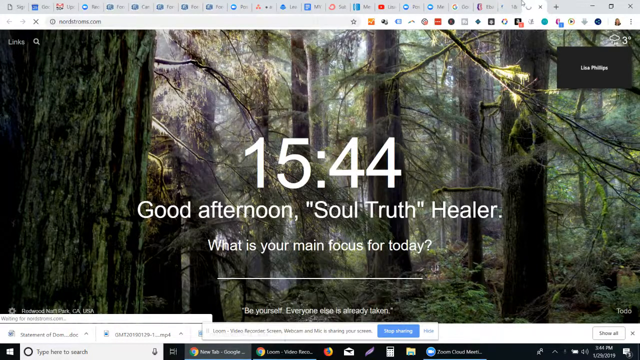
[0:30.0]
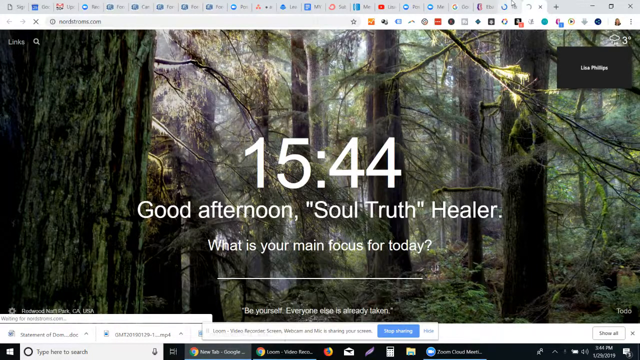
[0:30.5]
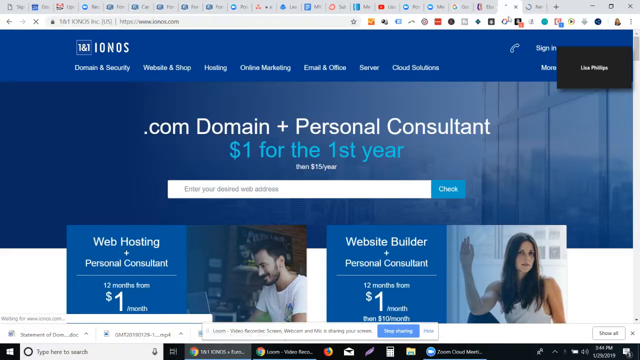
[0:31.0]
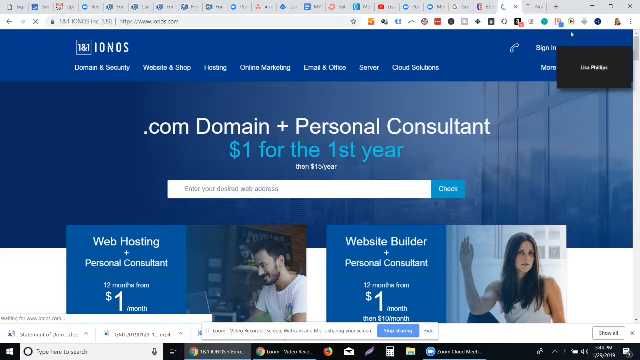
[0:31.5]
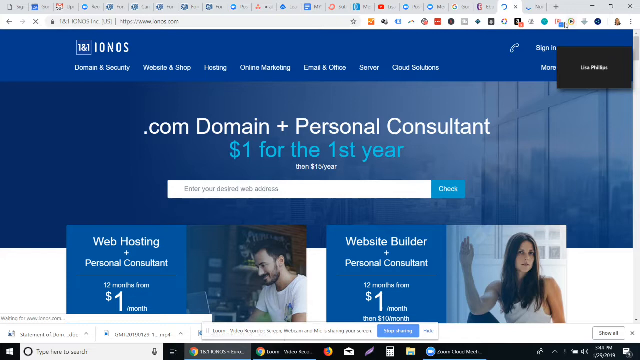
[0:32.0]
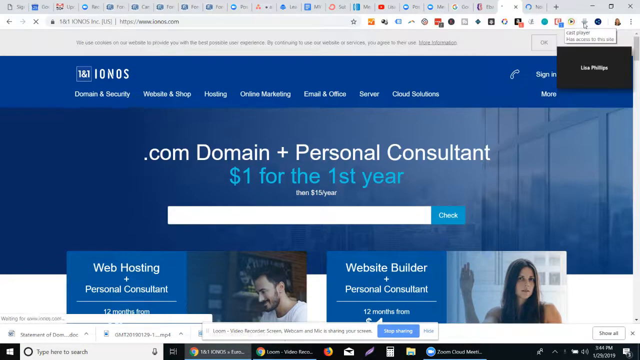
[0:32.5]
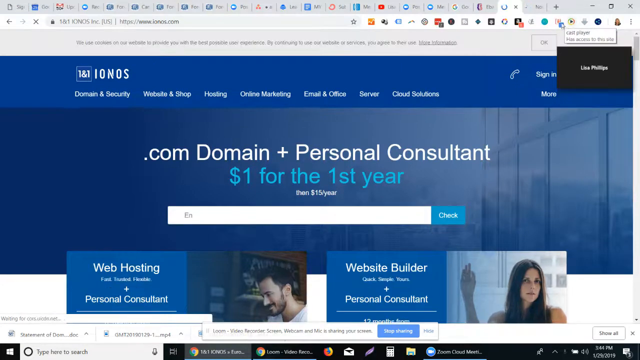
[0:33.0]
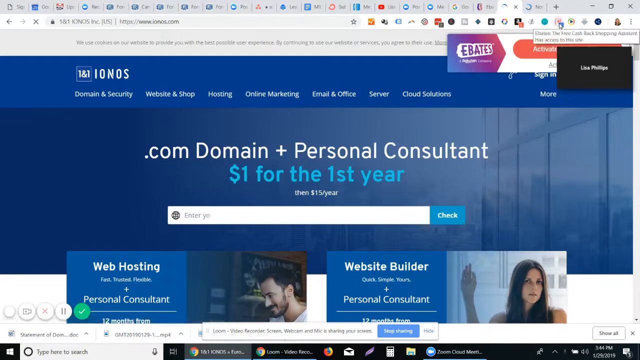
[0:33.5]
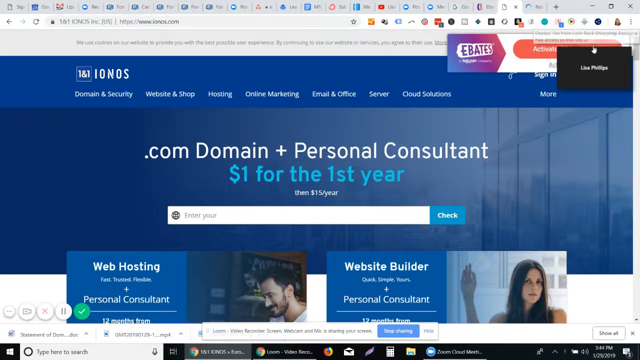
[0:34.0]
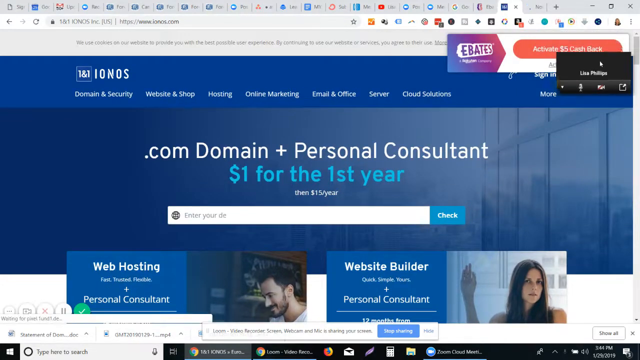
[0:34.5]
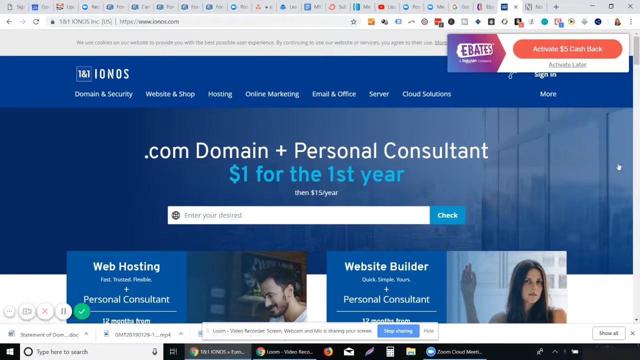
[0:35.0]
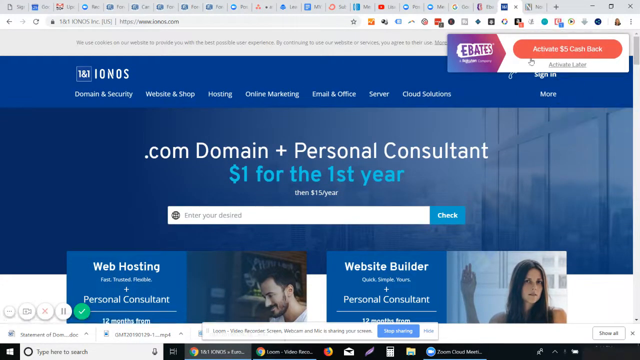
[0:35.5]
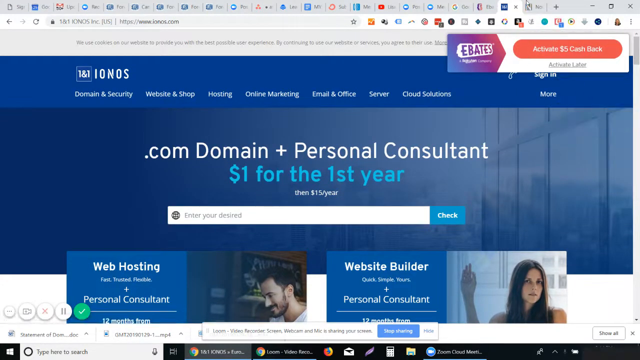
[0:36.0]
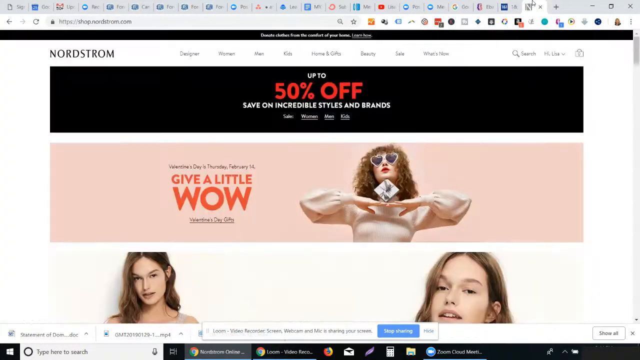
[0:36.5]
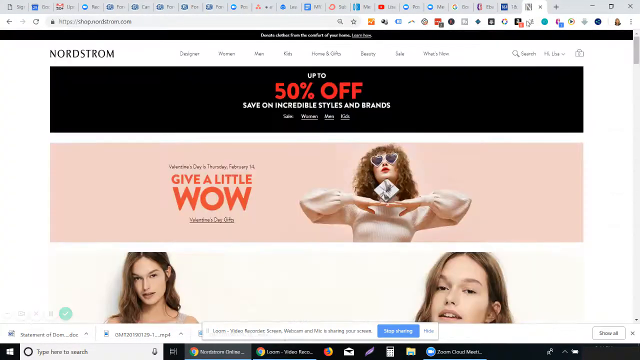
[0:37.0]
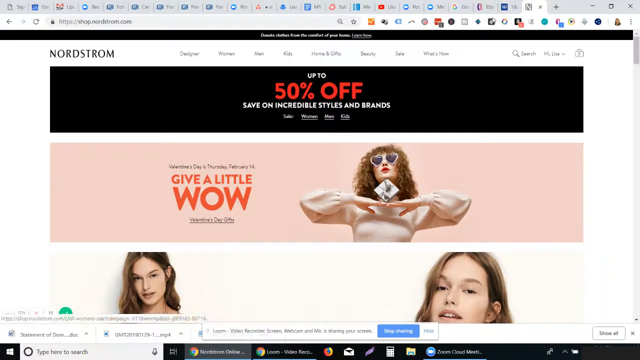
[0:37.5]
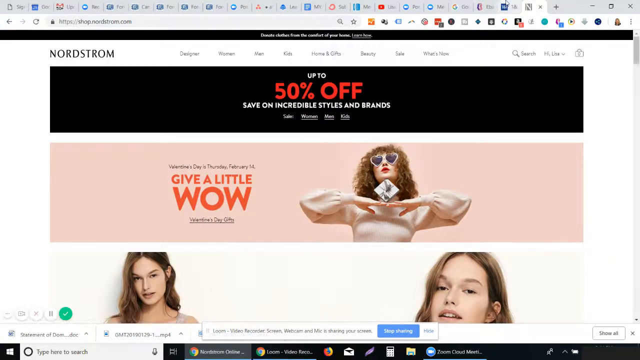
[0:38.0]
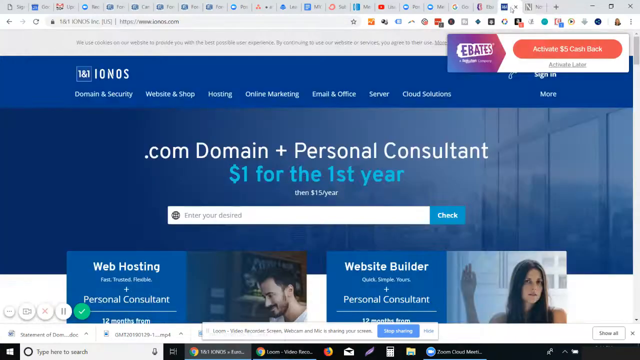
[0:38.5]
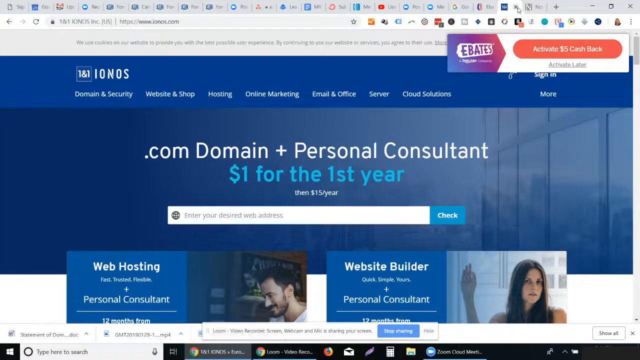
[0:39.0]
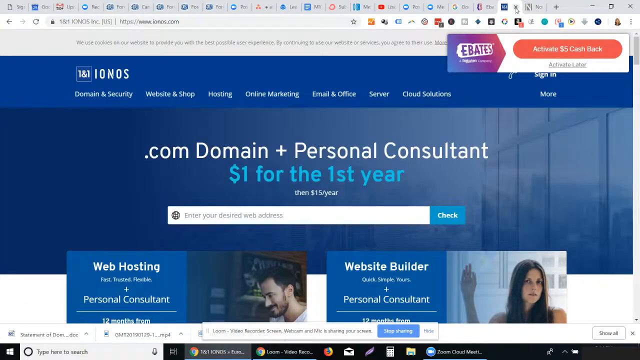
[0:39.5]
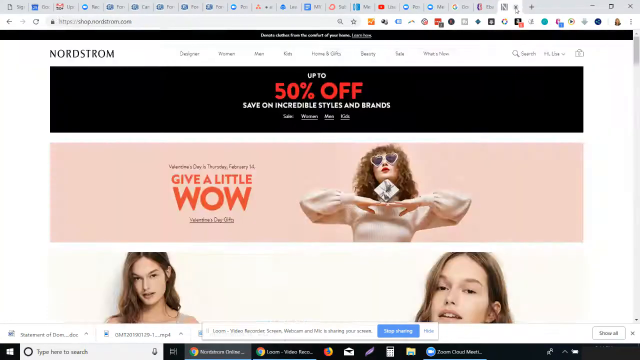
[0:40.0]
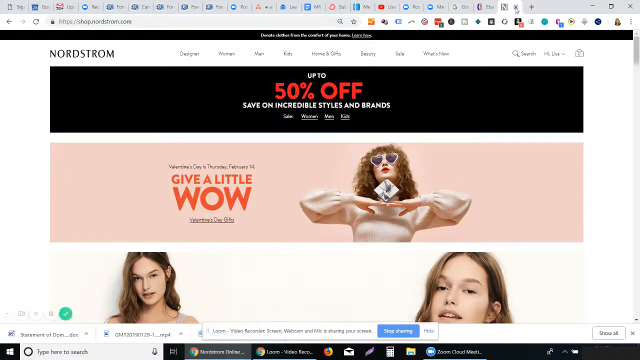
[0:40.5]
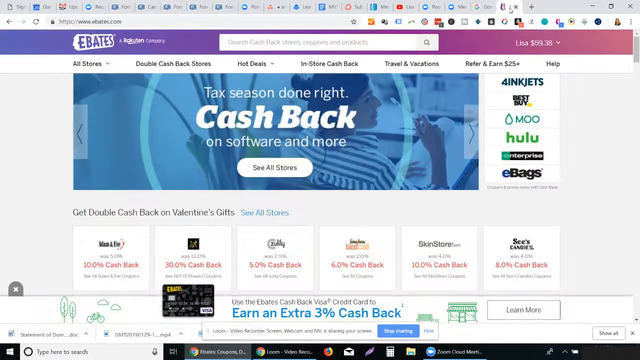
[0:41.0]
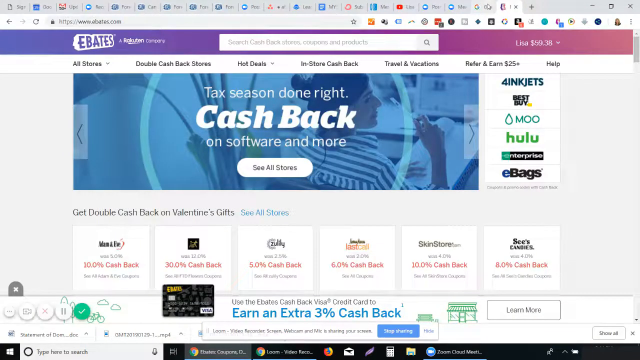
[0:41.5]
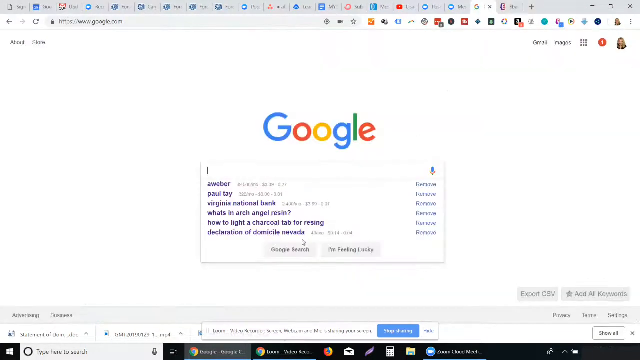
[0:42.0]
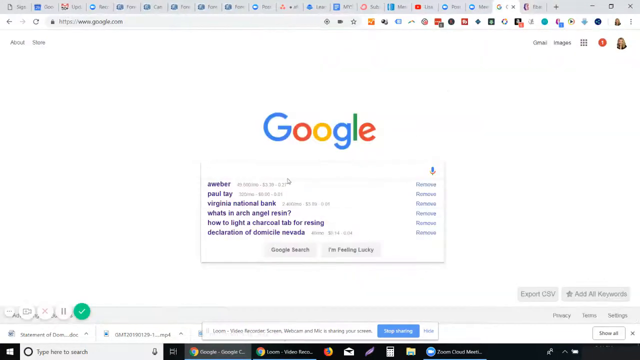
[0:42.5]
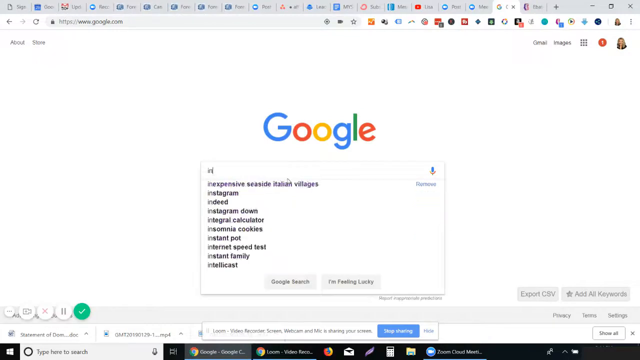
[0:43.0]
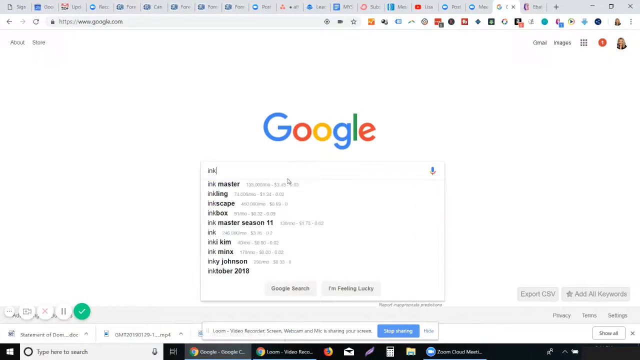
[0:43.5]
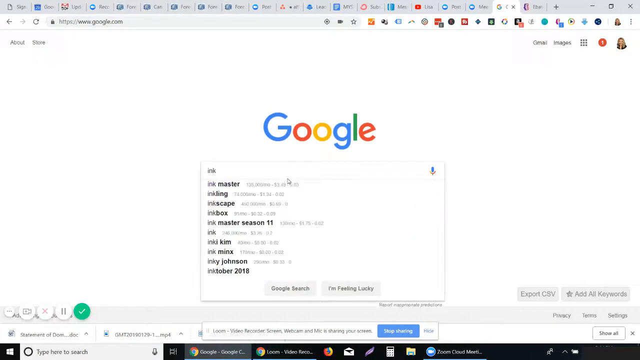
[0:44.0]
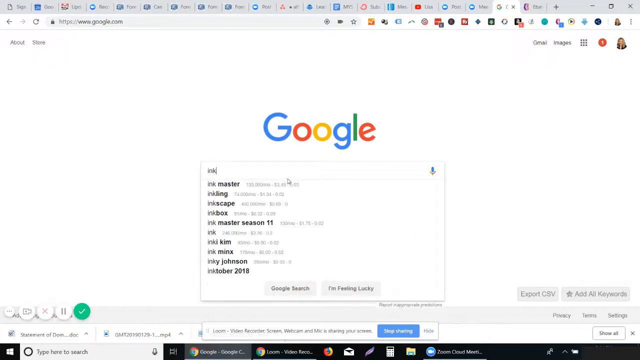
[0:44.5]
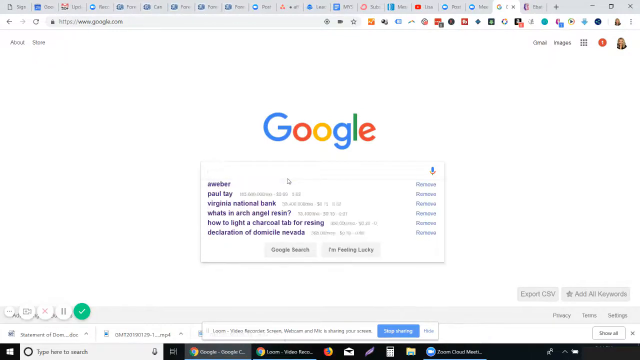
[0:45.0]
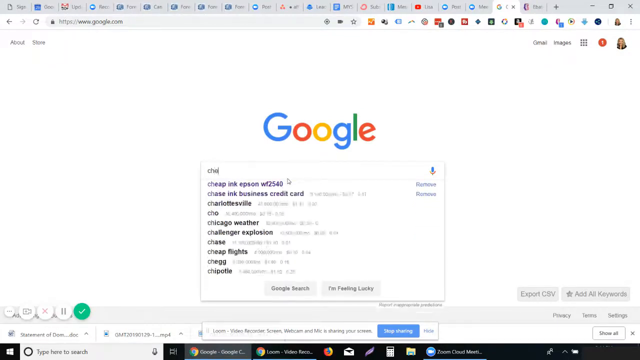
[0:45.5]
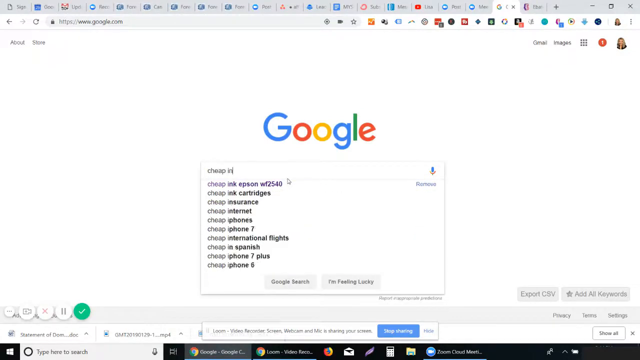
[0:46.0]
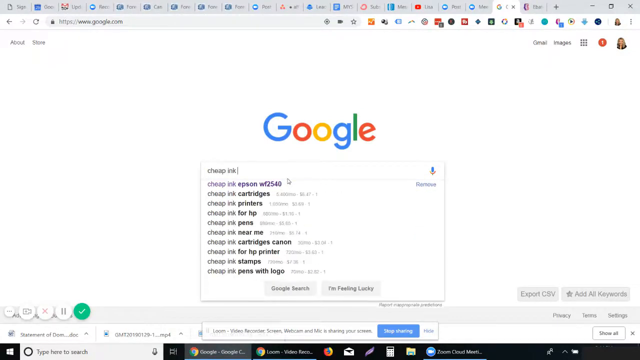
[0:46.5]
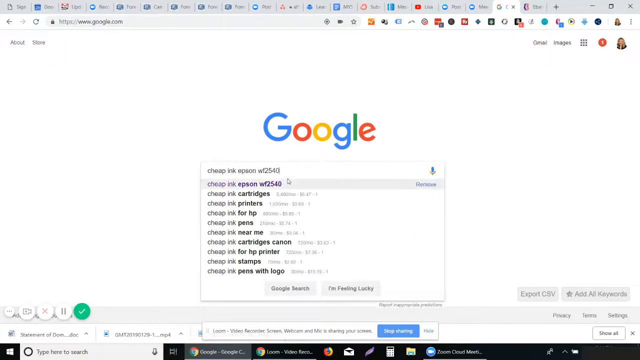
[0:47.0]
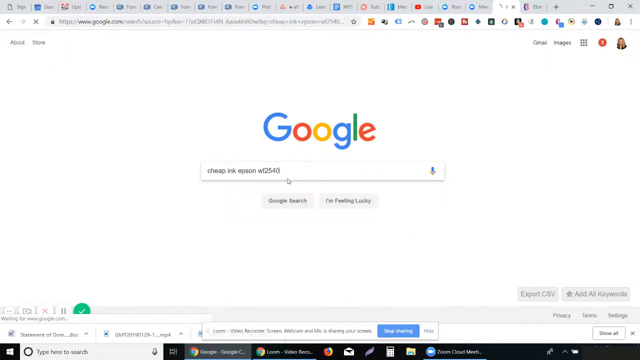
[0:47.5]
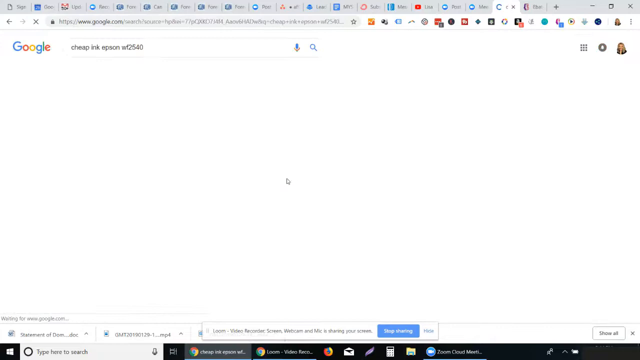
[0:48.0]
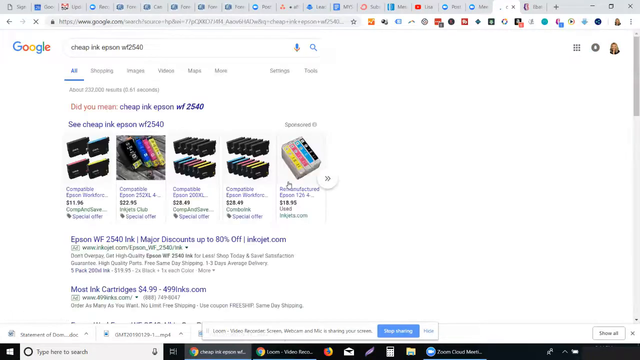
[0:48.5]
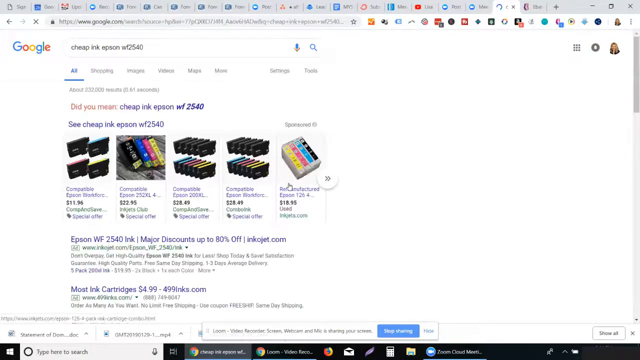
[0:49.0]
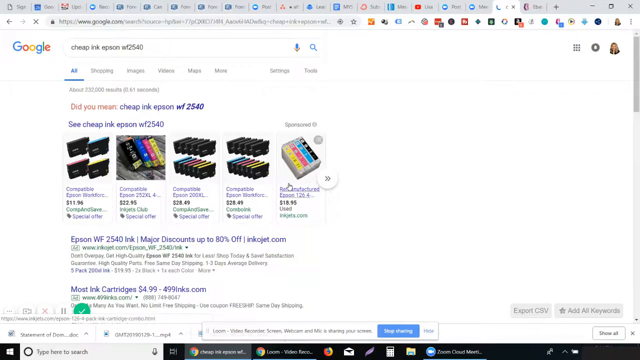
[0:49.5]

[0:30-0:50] Possibly another tab is opened; a lot of tabs are up. In the upper right-hand corner is a name that looks like Lisa, maybe Phillips. The page shows an image of something like woods, with text at the bottom reading "be yourself, everyone else is already taken." A time, apparently 3:44, is shown, along with "good afternoon" and "what is your main focus for today?" Next the IONOS site appears, reading "domain and security," with items that may read "website and shop," "hosting," "online marketing," "email," "office," "server," "cloud," and "domain plus personal consultant," and a price of "$1 for the first year," then maybe $15 each year. Ebates seems to pop up, then the Nordstrom website appears, then the Ebates link, and then the person goes back to Google, where the search reads "cheap ink Epson," apparently looking for ink for their printer.